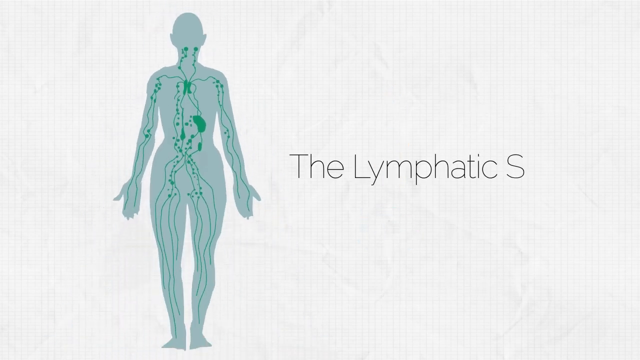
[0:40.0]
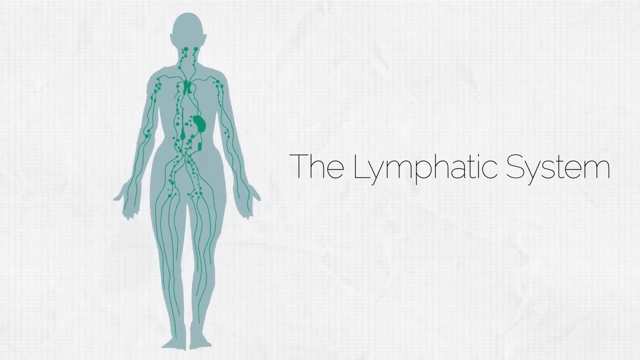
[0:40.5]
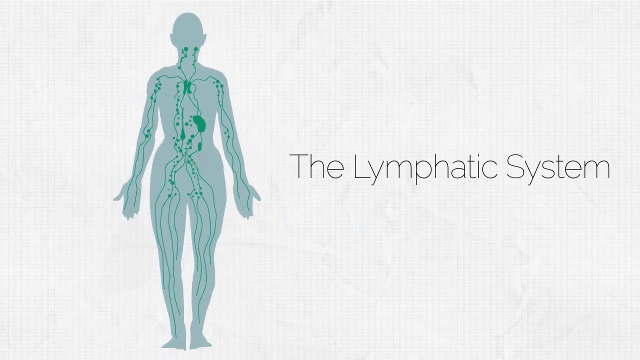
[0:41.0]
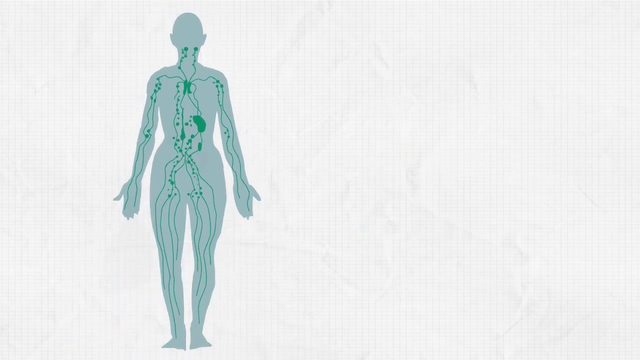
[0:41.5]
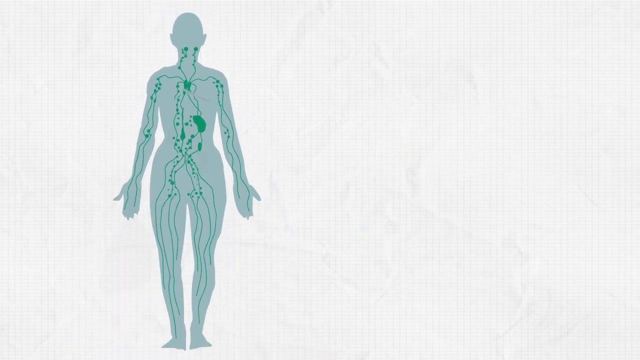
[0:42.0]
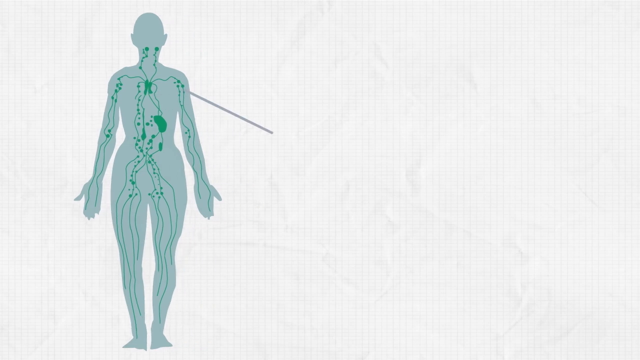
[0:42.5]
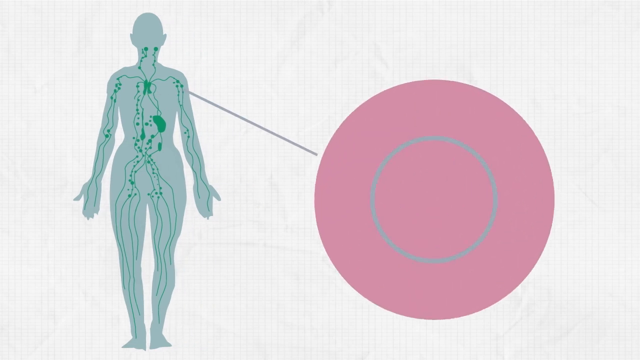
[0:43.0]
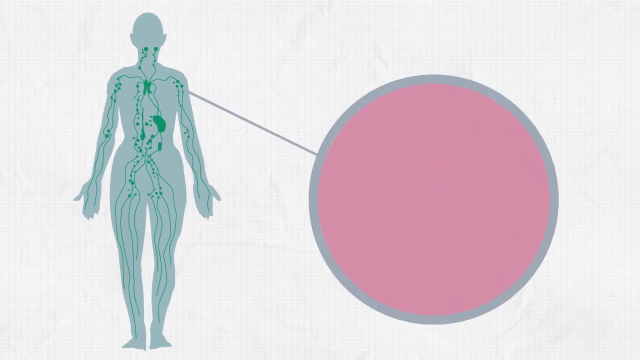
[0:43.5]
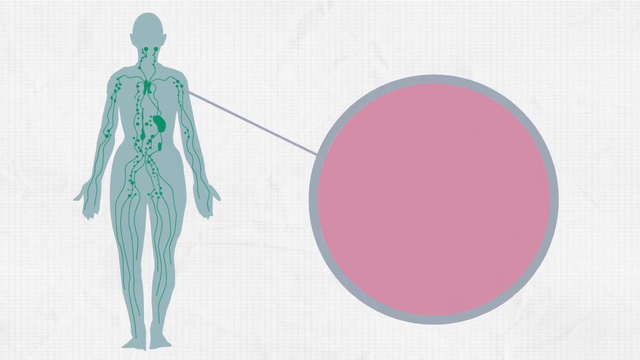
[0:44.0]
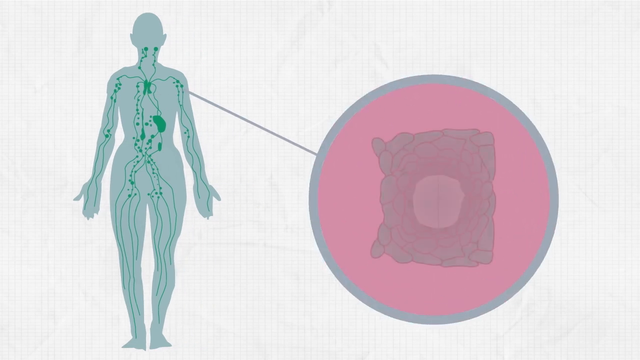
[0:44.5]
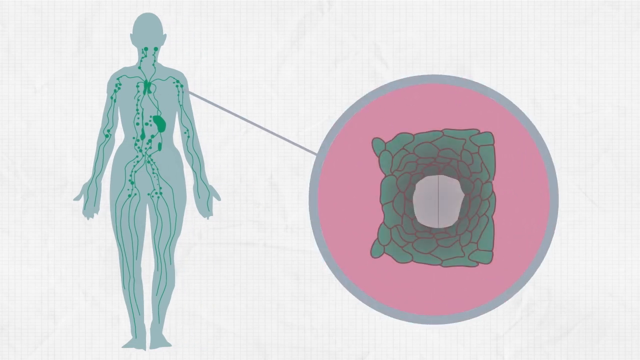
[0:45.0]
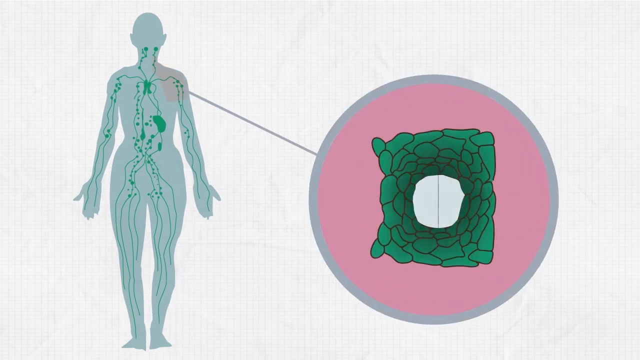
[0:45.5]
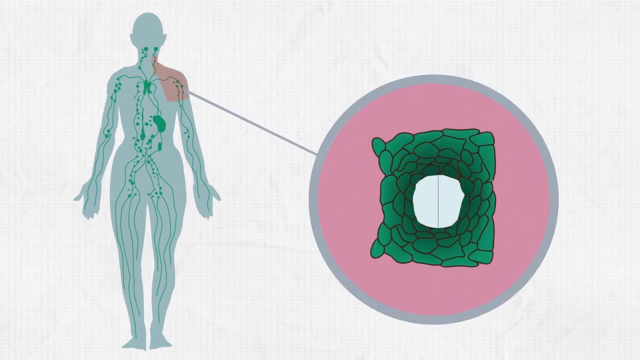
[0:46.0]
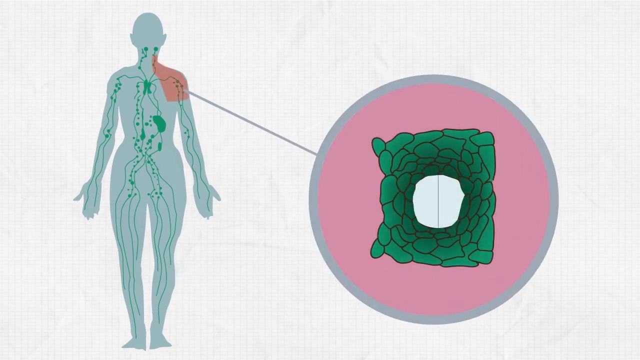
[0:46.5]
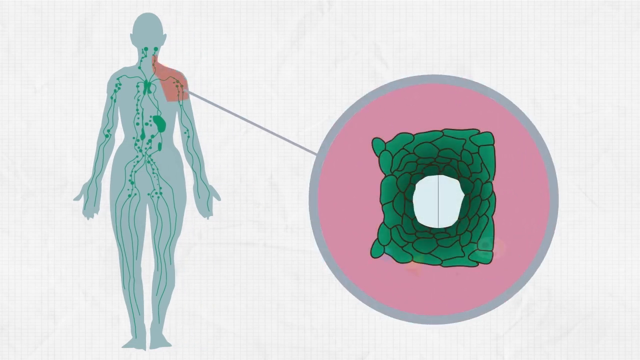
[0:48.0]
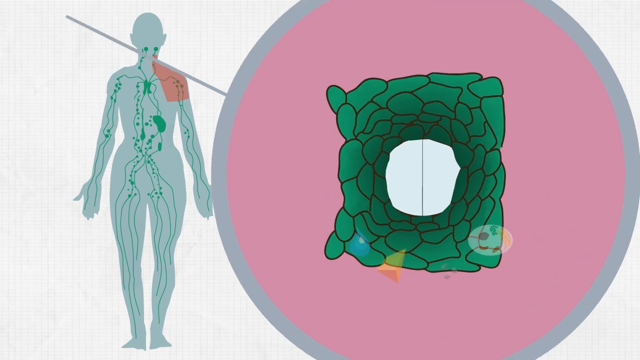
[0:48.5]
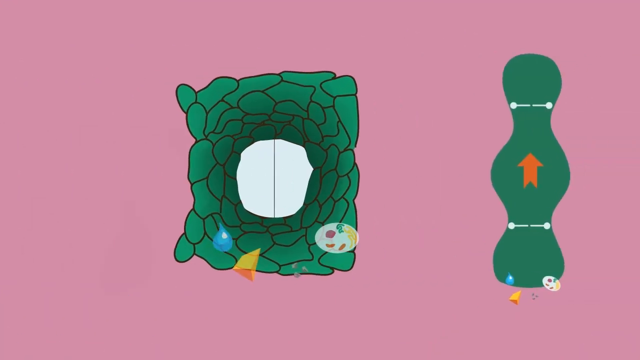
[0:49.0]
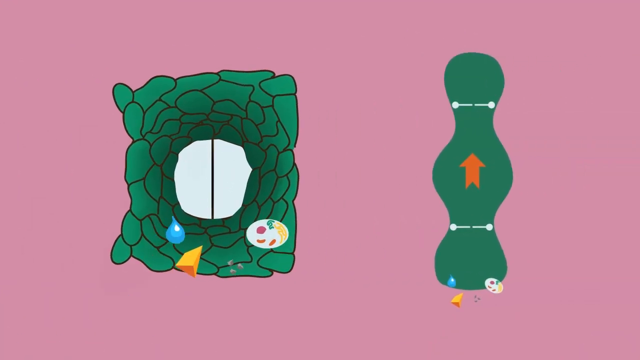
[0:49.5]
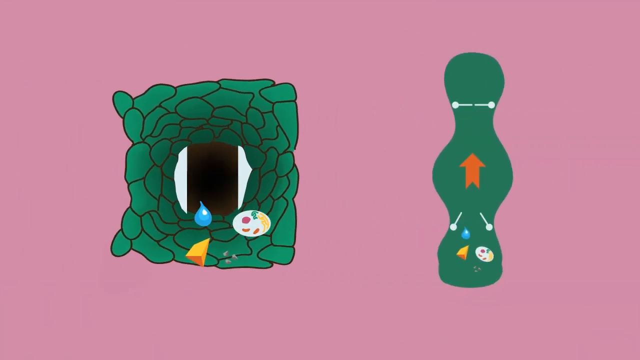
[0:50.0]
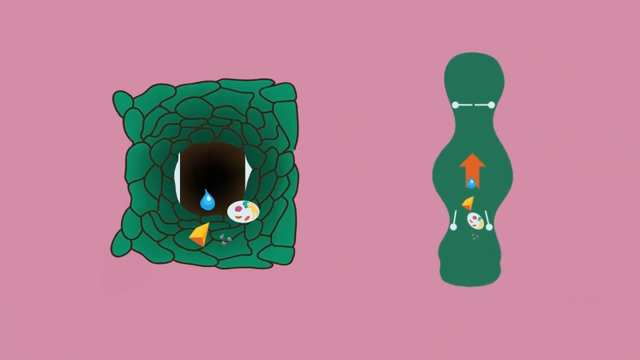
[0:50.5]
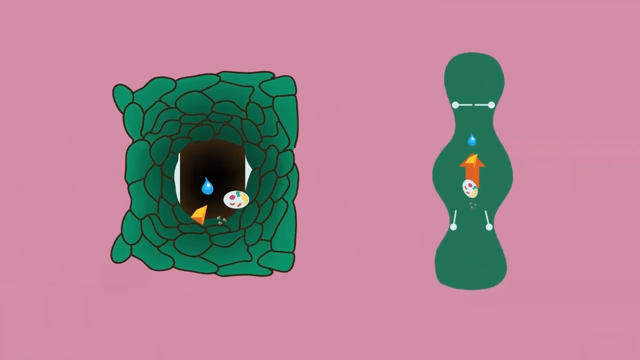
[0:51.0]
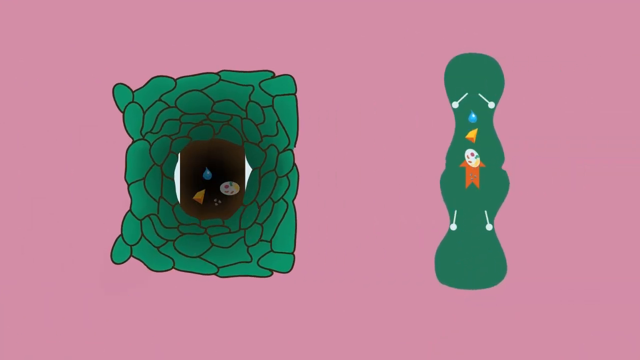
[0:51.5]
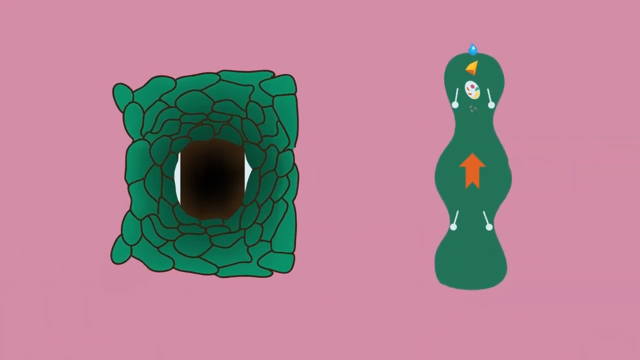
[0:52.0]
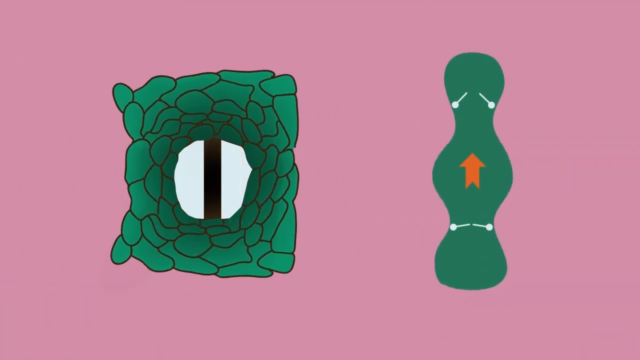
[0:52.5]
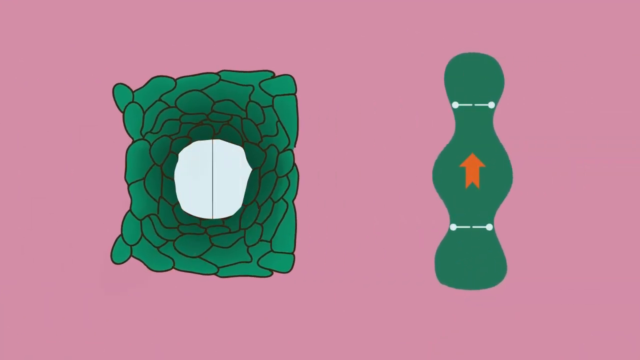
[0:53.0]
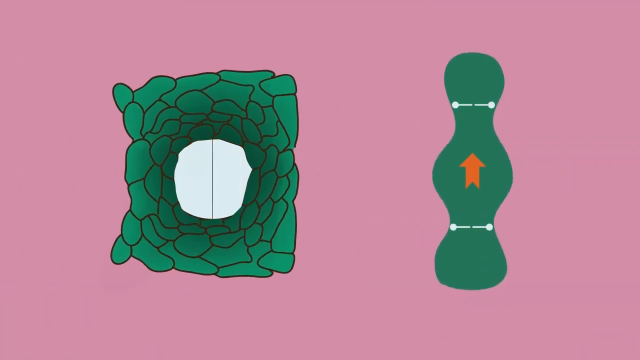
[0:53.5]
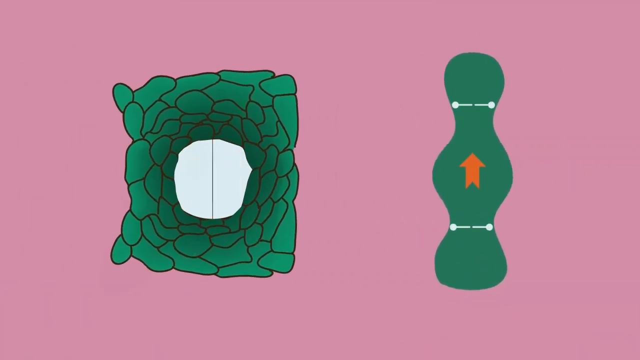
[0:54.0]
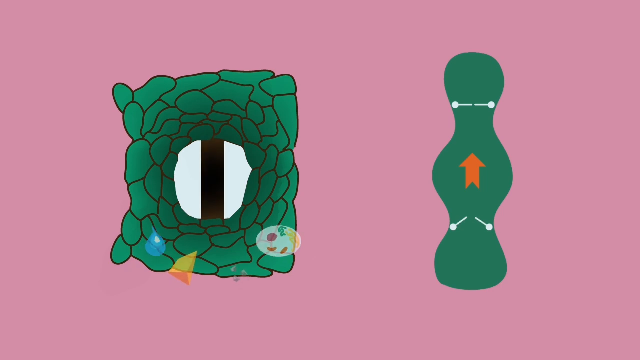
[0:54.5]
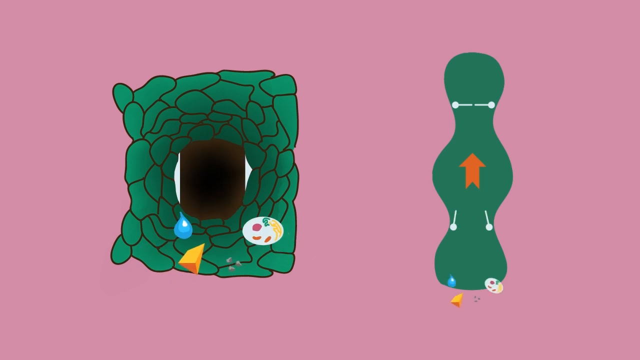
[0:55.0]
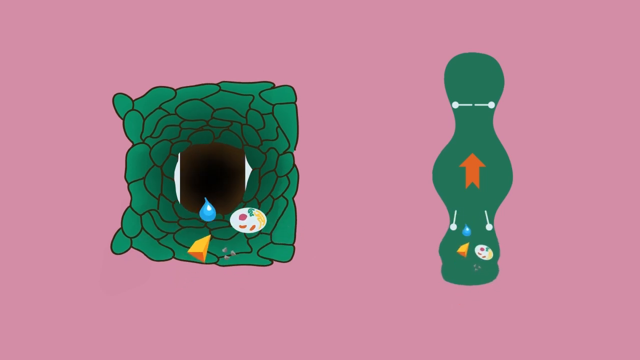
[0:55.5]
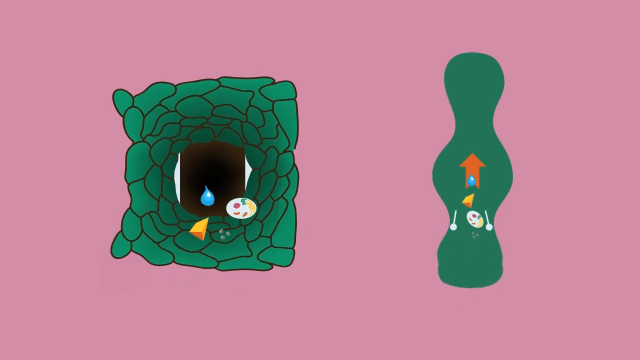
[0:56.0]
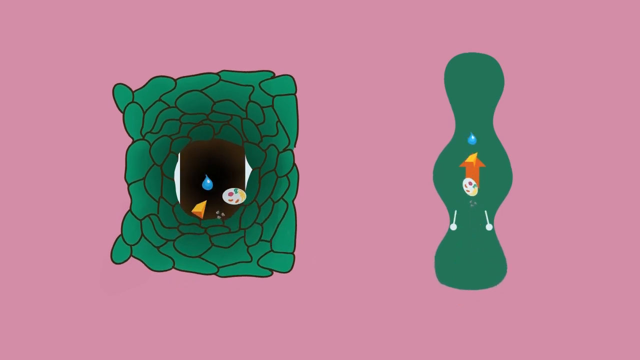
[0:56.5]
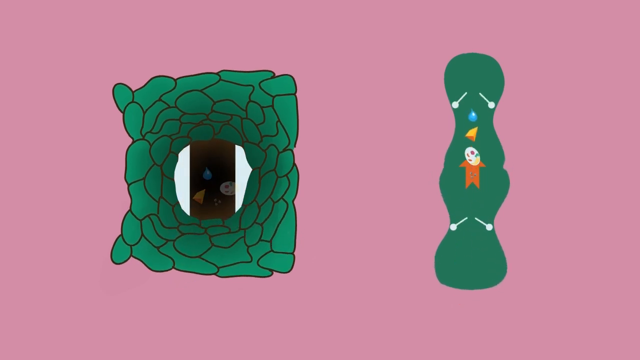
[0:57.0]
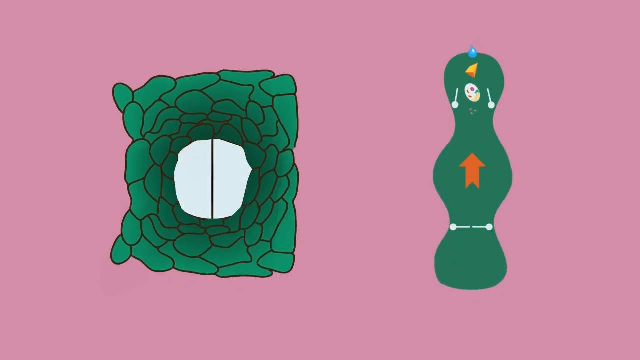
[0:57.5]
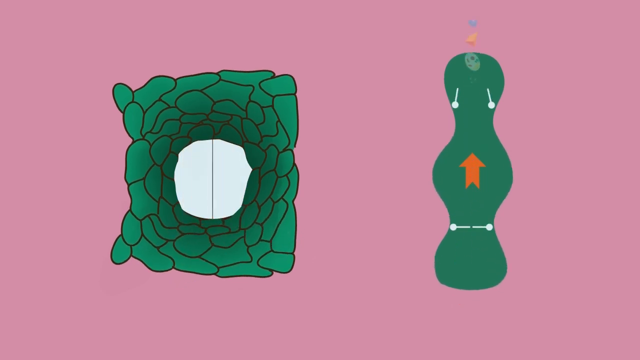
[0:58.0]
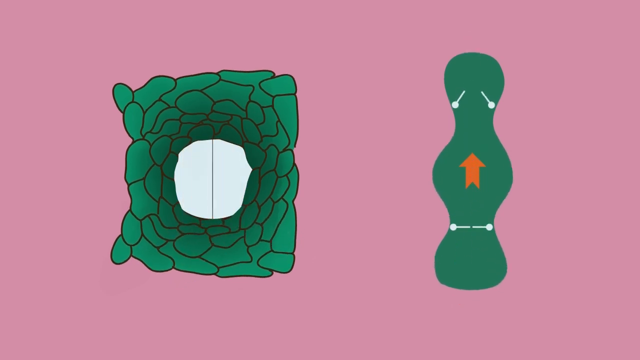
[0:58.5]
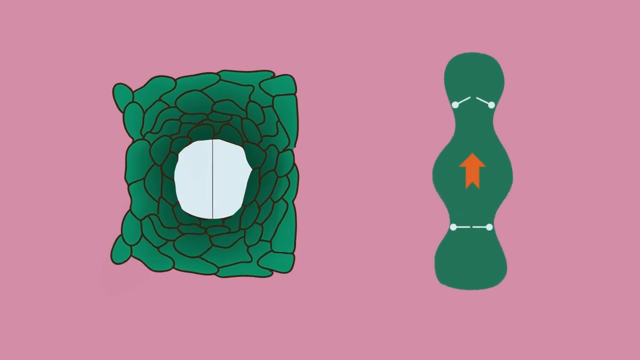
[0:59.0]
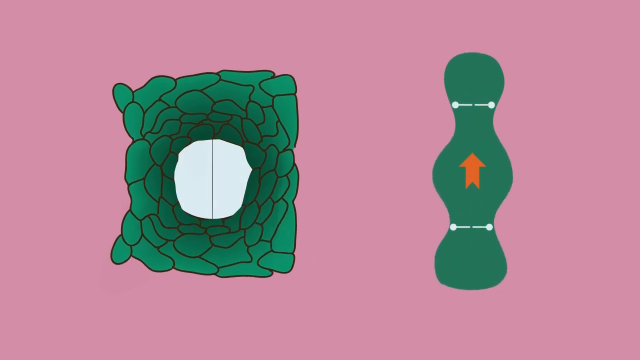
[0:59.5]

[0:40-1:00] The label disappears. Judging by the hips, the silhouette appears to be a woman rather than a man. A line goes from the shoulder on the viewer's right, angling down to a large pink circle outlined in gray. Inside is what looks like a bunch of little green cells with irregular outlines, almost like green stones or rocks, arranged in a square shape surrounding a white circle in the middle. This moves off to the left, and the same green and white graphic appears on an all-pink background. To its right is a kind of bottle-shaped green illustration with an orange arrow pointing up and two sets of little white lines, like gates, across its top and bottom. The lower gate opens, and little icons, apparently the earlier drop of water, cheese, and cells, move up to the top of the bottle; the second gate opens and they leave the system. Meanwhile on the left, the white circle in the middle opens like a gate, revealing black, and the little protein, water, and cells illustrations enter the black hole before the white gate shuts. The process then appears to be shown happening again, seemingly illustrating how things may pass through the lymphatic system and the body.